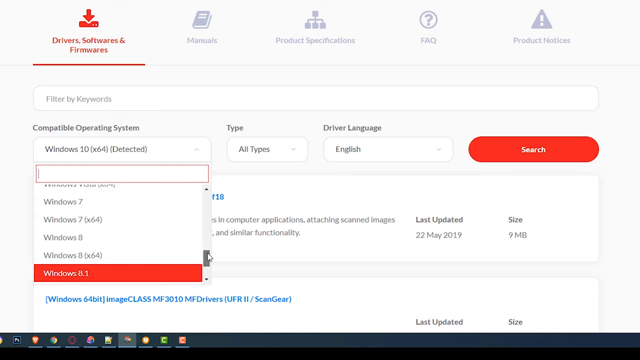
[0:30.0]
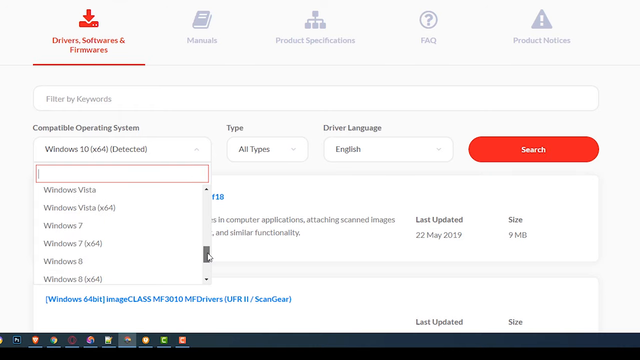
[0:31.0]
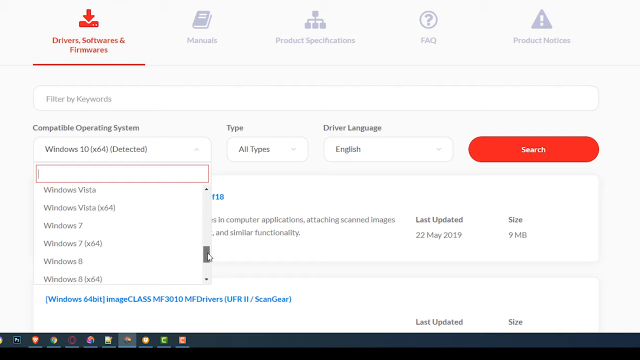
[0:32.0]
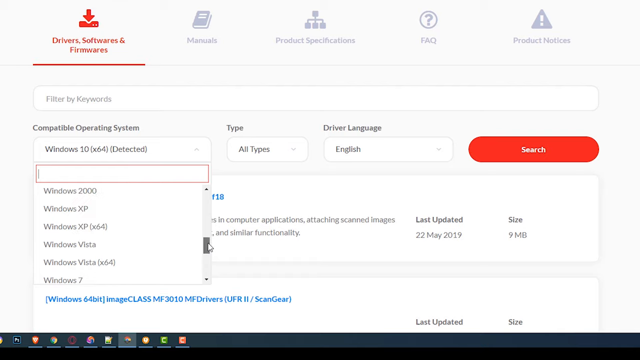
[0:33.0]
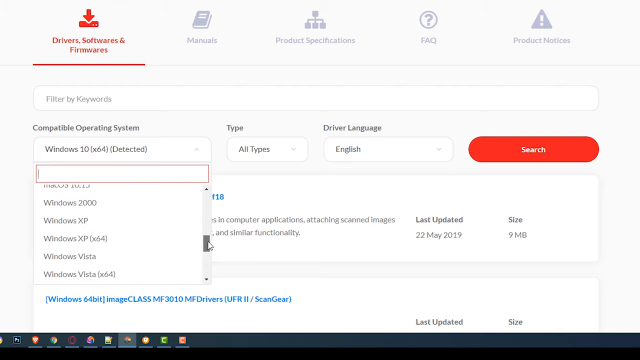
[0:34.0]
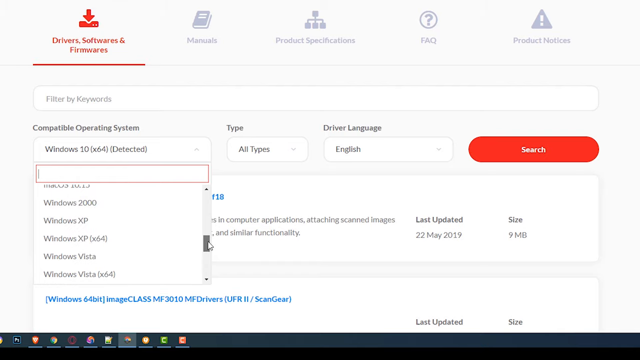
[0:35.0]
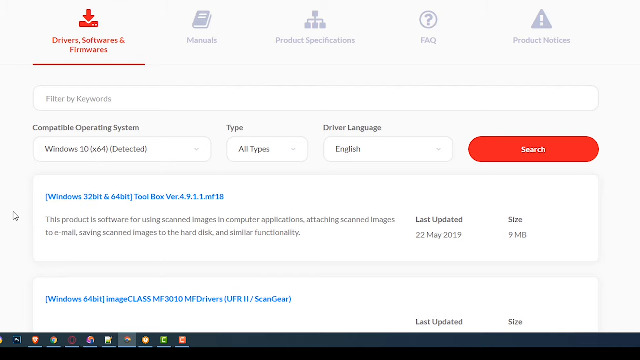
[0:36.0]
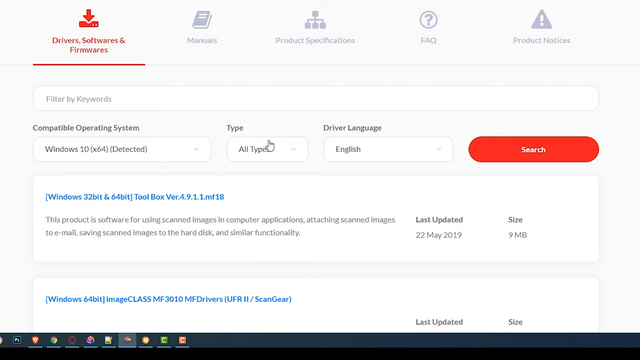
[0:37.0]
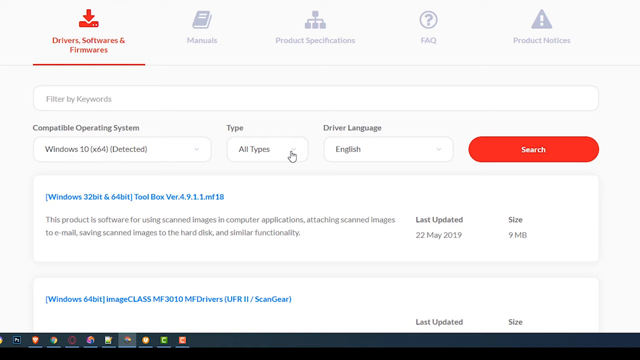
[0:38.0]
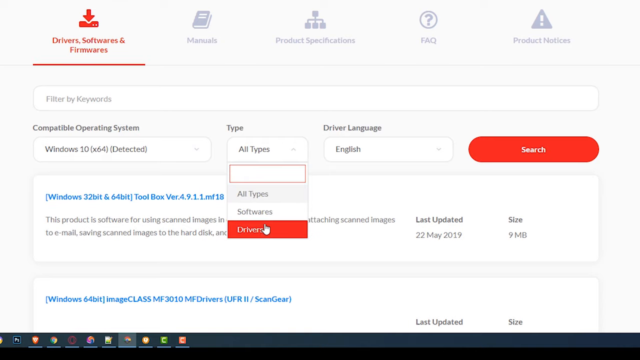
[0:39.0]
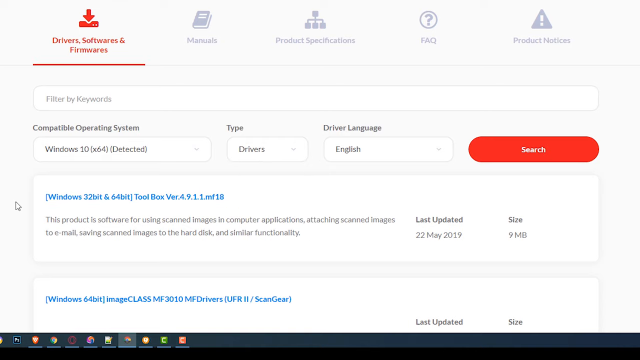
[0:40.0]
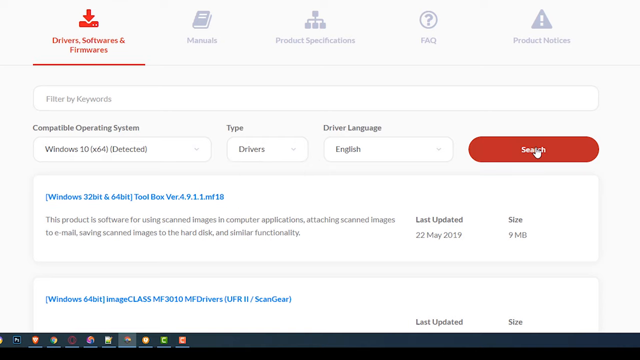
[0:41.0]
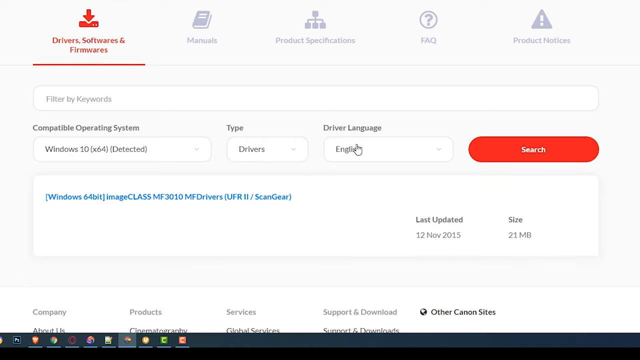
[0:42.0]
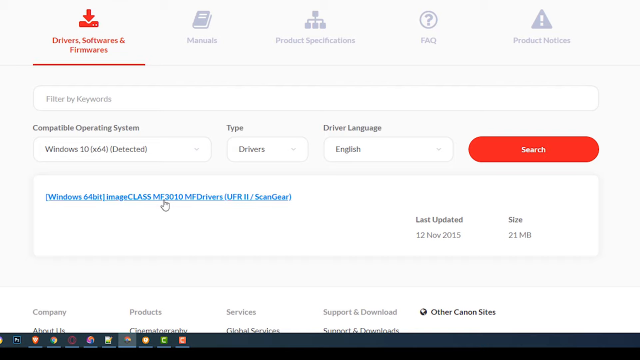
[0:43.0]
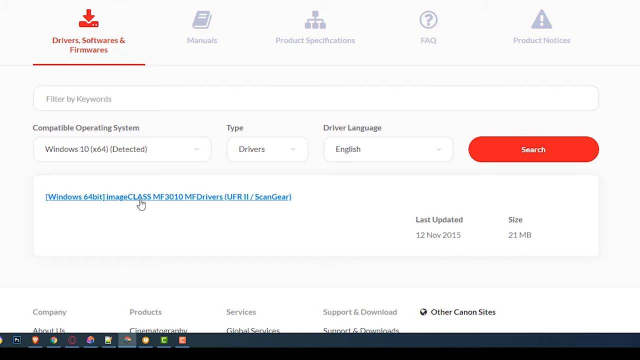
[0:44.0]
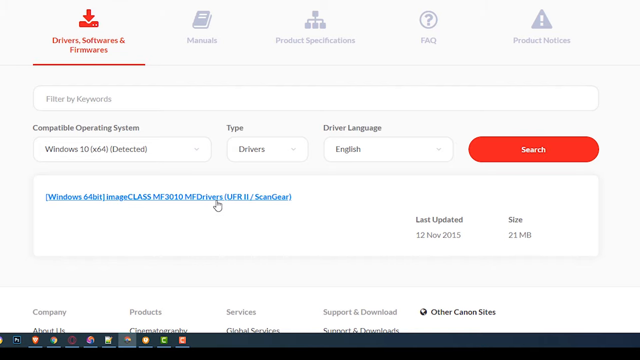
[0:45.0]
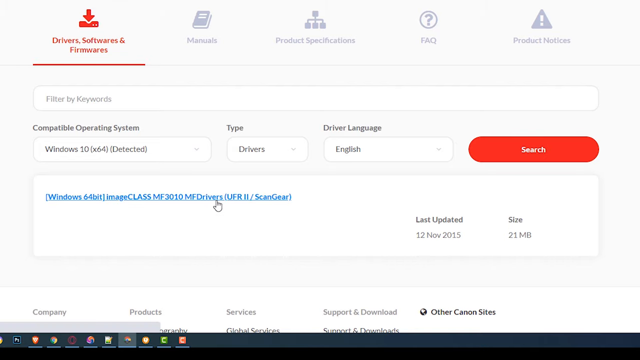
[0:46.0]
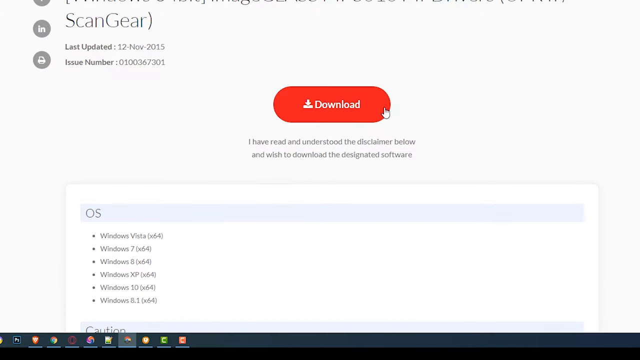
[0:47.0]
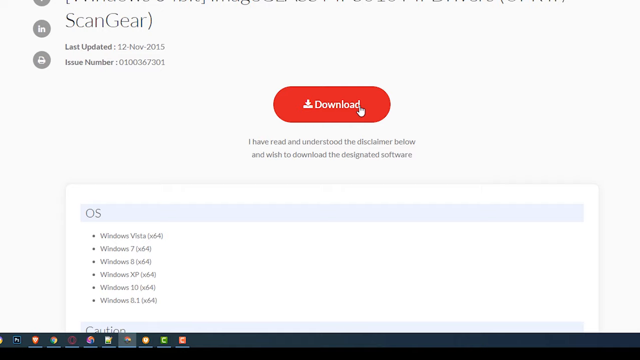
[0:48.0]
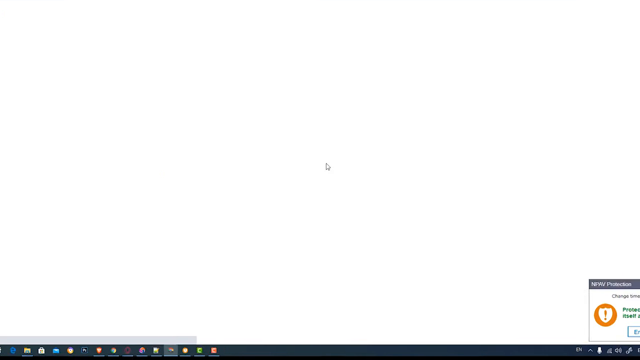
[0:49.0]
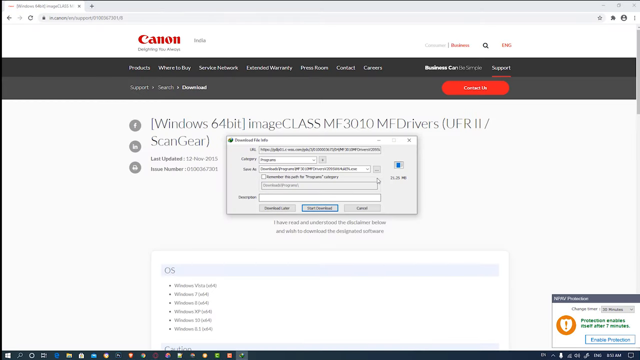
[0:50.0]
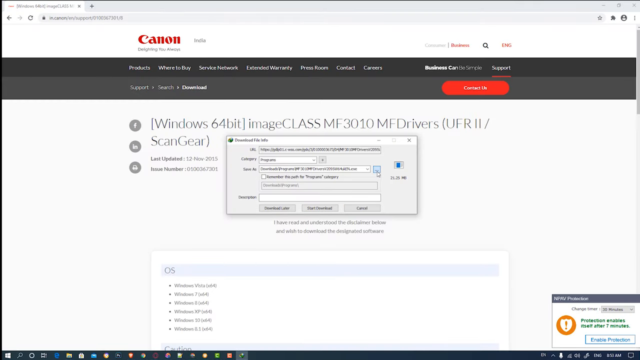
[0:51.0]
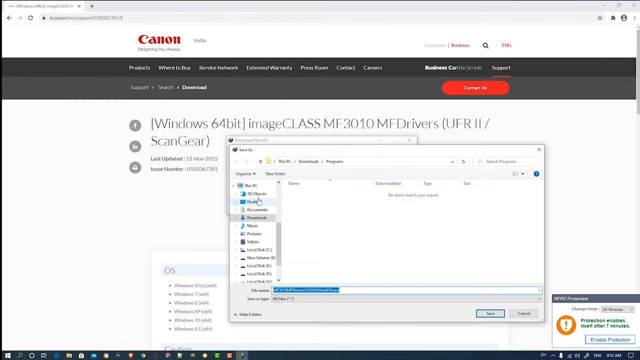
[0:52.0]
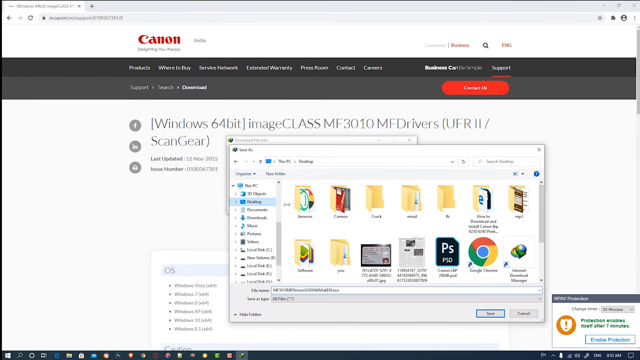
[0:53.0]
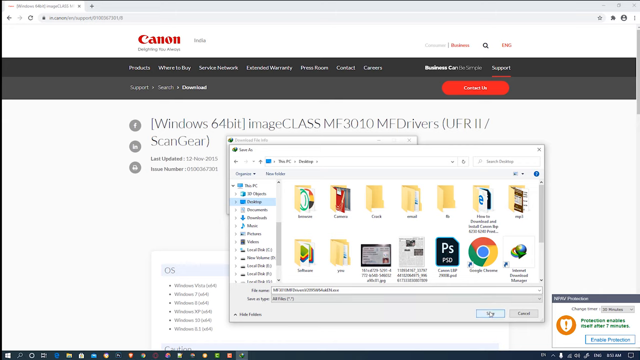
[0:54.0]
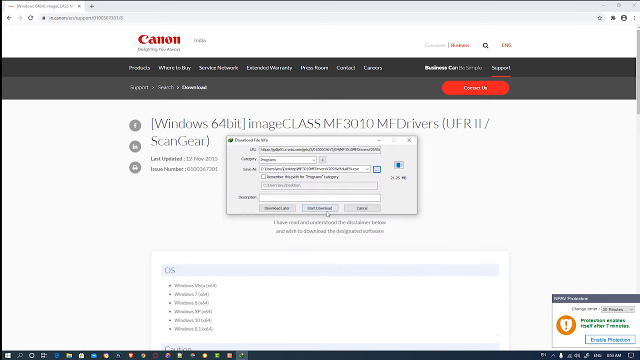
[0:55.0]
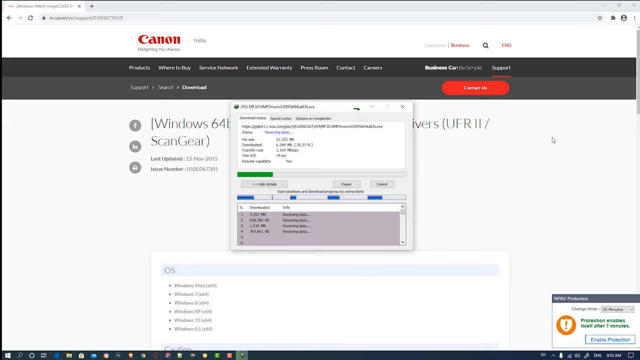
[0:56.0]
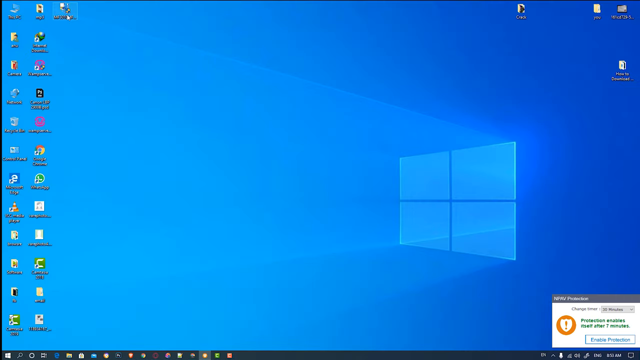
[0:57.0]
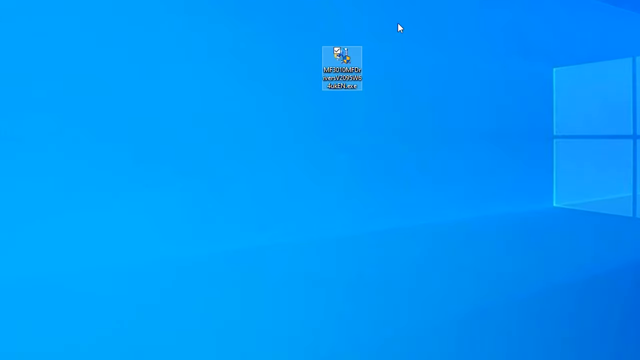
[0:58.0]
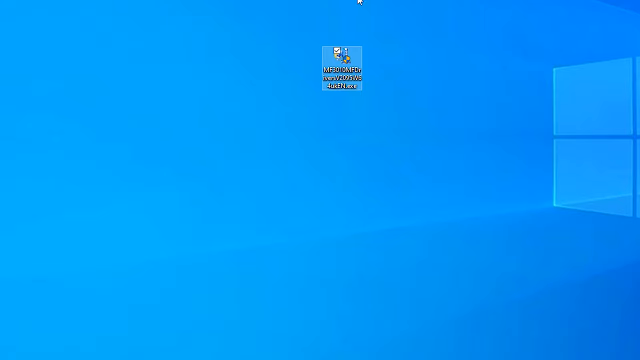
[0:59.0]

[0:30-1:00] On a website, a user clicks on a drop-down menu, and a menu pops up with a whole bunch of options written in black text on a white background. They seem to scroll through the options and eventually click on Windows 10. They then click on another drop-down menu with the text "type" on top and select an option from it. Next they click on a red search button on the right side, which seems to bring up a link written in blue text underneath. The user hovers the cursor over the link and clicks on it, and it navigates to another page with a red button that says "download" in white text. They click on that as well, and it navigates to another page with a pop-up window, where they select an option. Another, slightly larger window appears; they click an option, click on a folder and click another button, and something can be seen kind of downloading. The download then appears on the home screen as an icon.